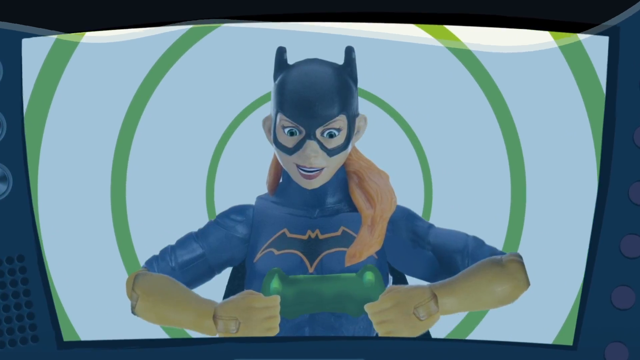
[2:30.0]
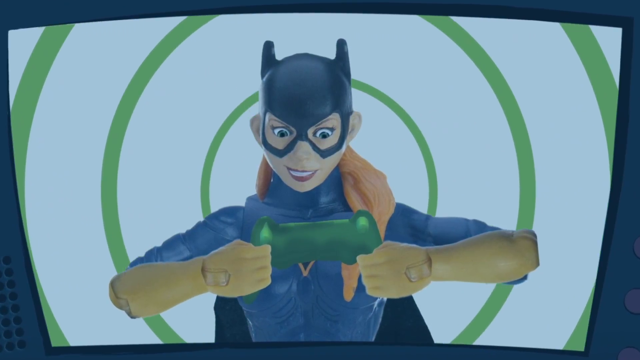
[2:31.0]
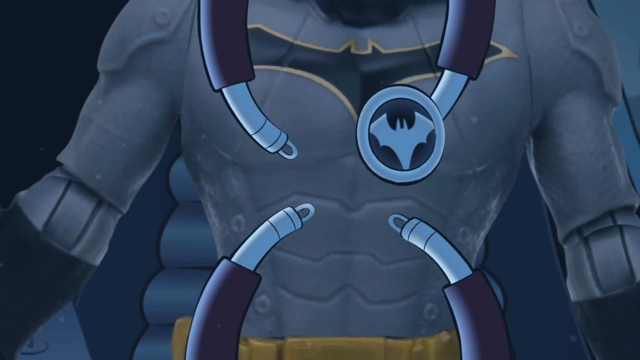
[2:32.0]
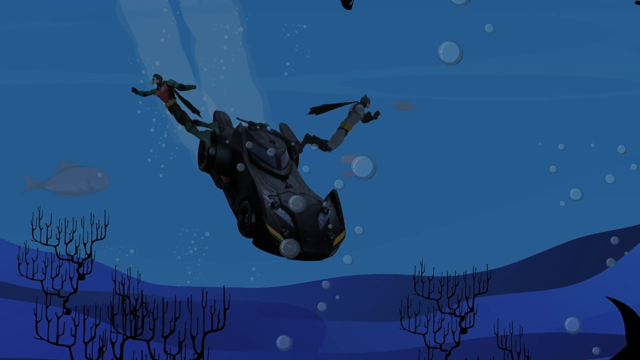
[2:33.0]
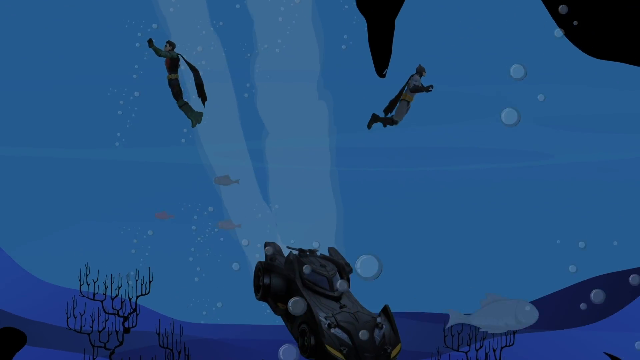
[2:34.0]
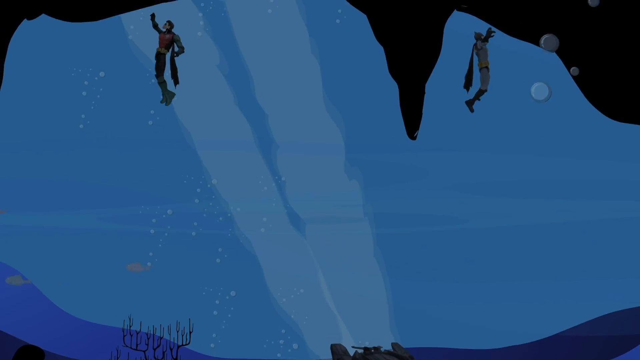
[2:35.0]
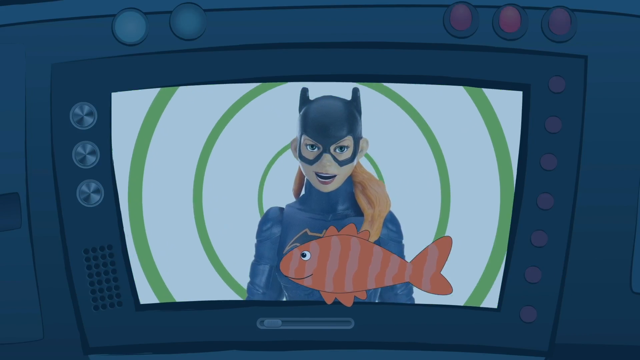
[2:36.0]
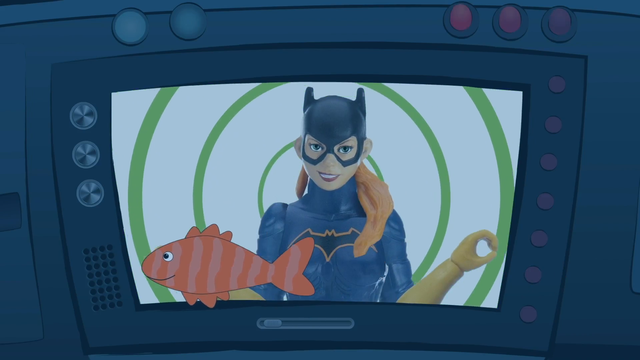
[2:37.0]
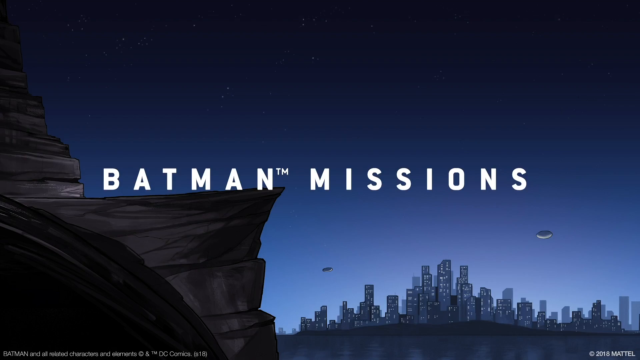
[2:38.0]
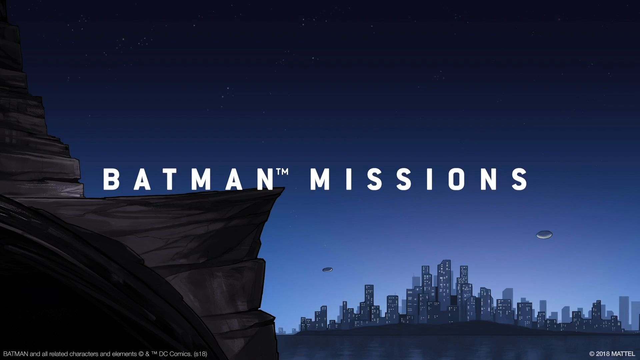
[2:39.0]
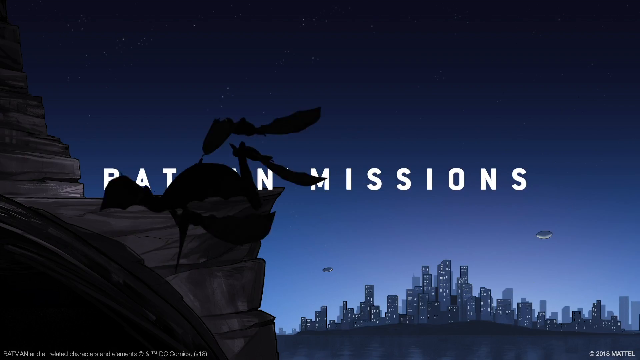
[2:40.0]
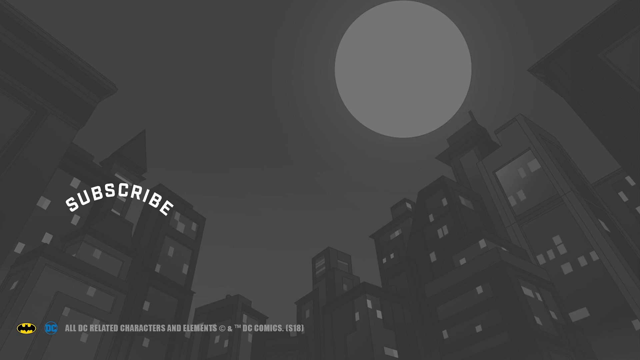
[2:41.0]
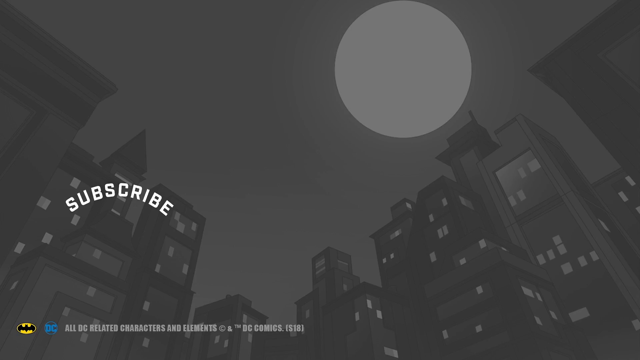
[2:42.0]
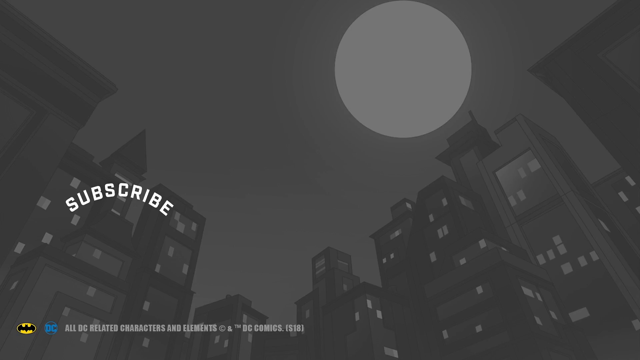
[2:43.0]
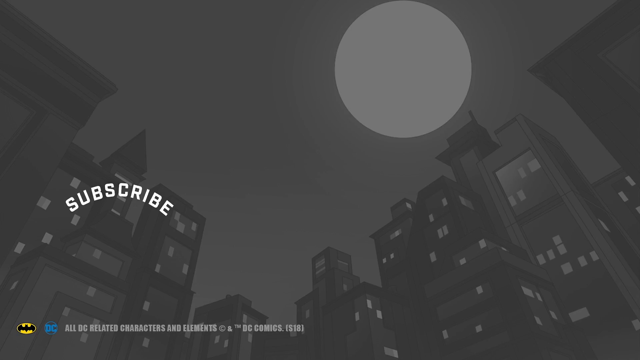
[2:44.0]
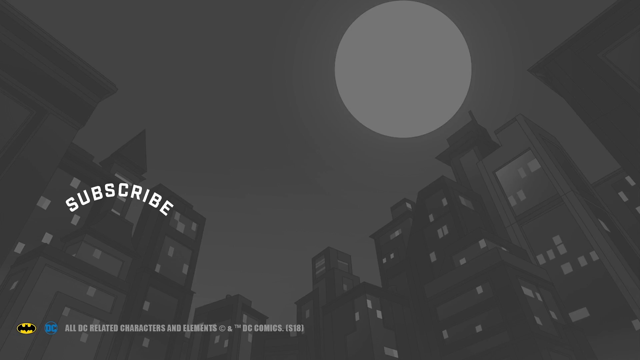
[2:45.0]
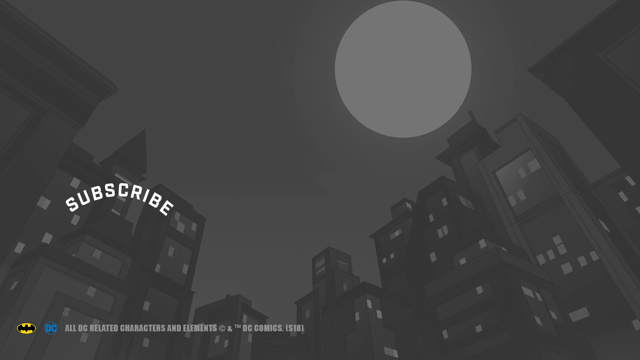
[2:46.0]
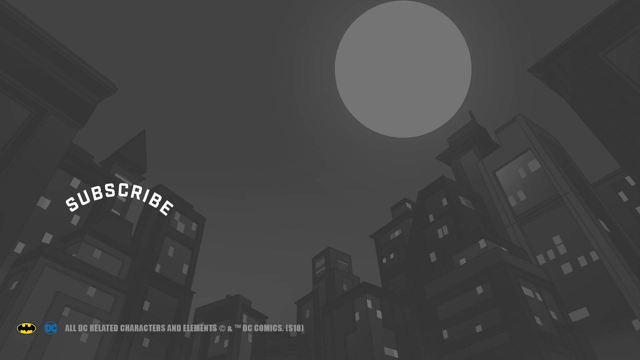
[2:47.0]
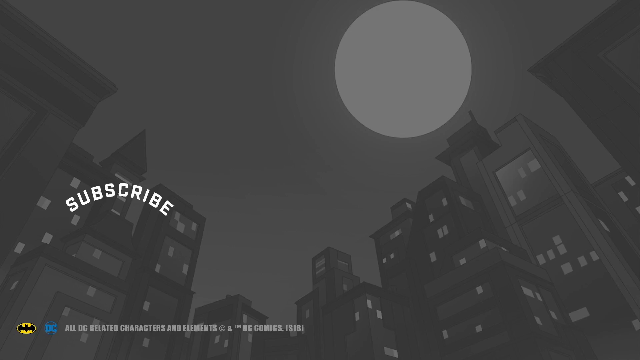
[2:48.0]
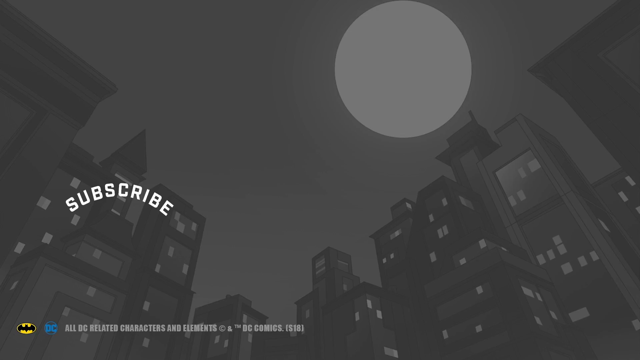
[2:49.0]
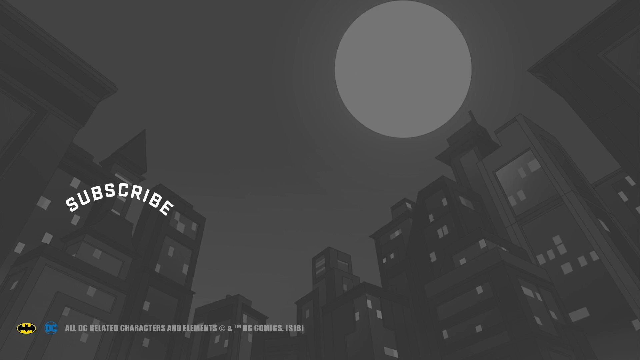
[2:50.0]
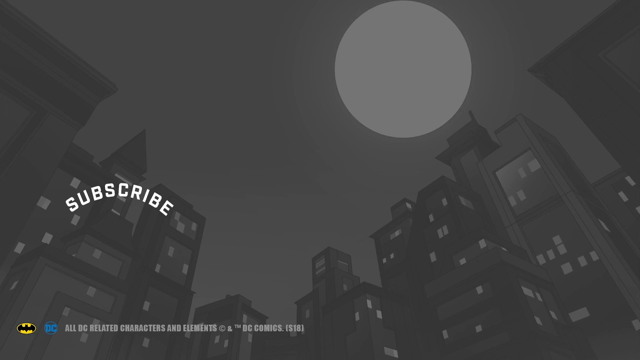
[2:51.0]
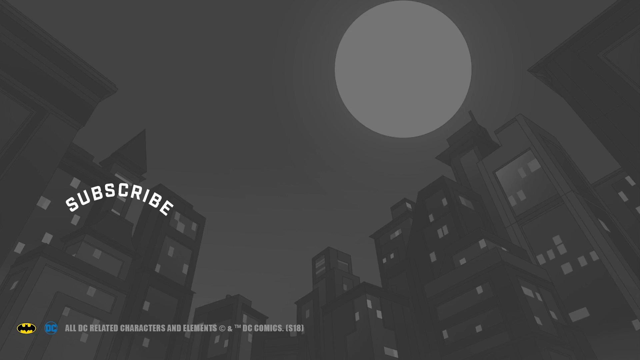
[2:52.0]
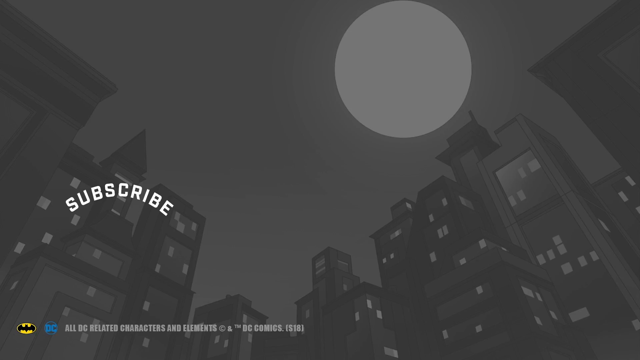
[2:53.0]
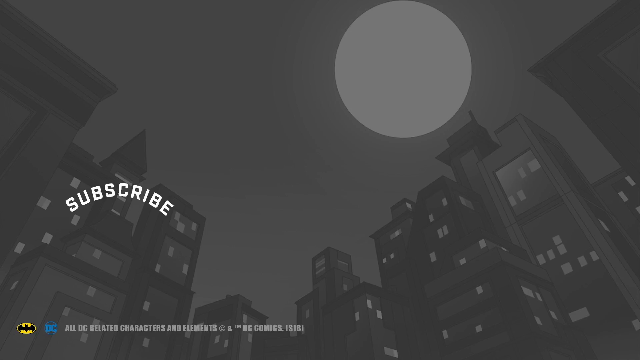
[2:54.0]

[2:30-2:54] Batgirl is on the screen in the Batmobile where the Riddler was, holding the controller the Riddler had after kicking him. She appears to be talking while looking at the controller, and she hits the button. The Batmobile sinks in a body of water, and Batman and Robin slowly start to swim out. As the Batmobile finally sinks to the bottom, some fish swim by the screen in the Batmobile, including an orange fish passing while Batgirl talks on the screen. The view goes back to the cliff the Batmobile was flung off, with the text "Batmissions DM". Bats fly by and "subscribe" appears. A street view of Gotham City looks up at the moon, with buildings that have lights in the windows.